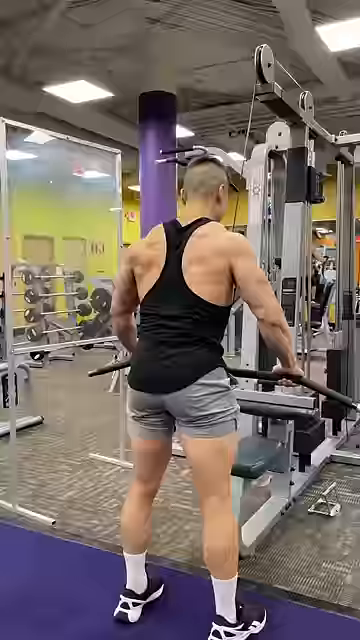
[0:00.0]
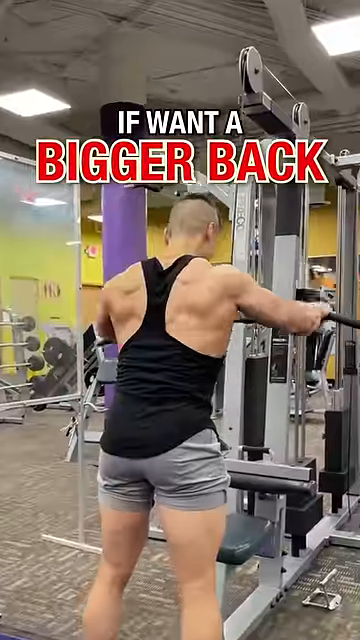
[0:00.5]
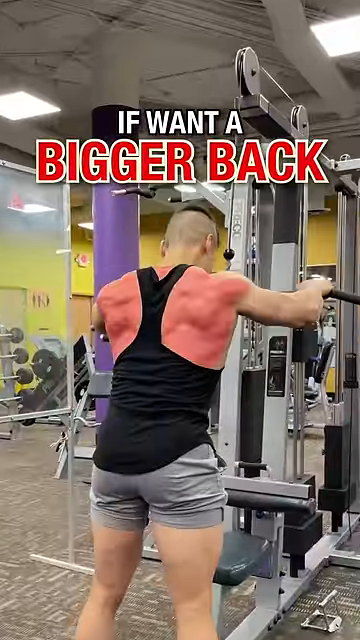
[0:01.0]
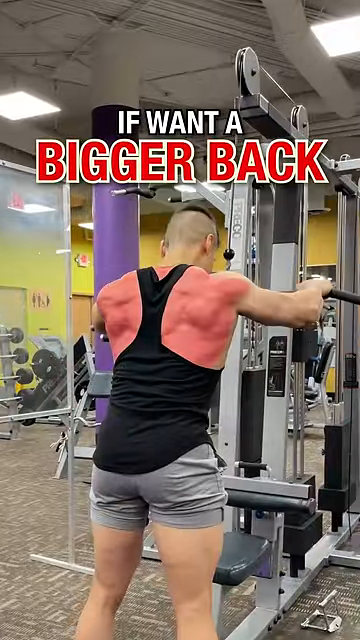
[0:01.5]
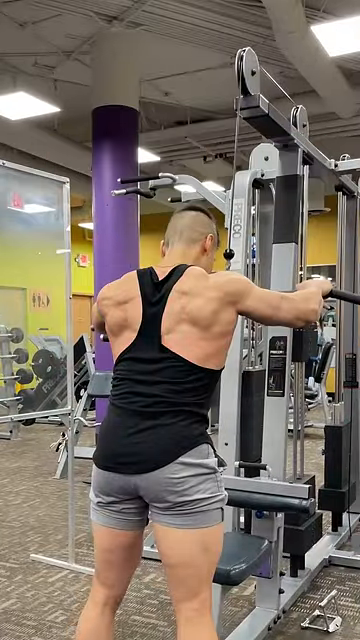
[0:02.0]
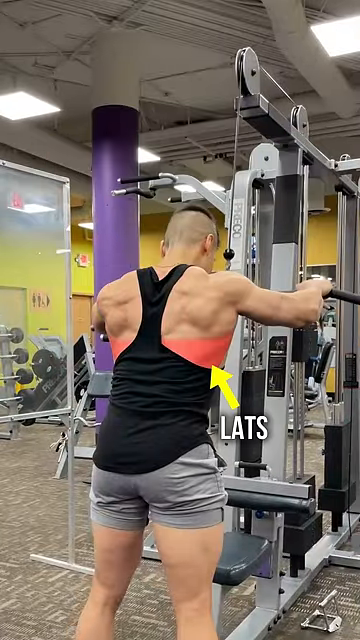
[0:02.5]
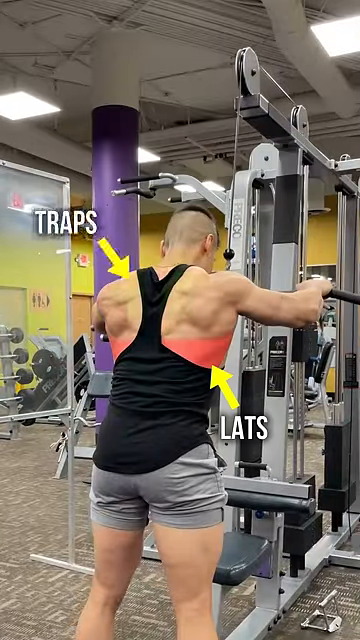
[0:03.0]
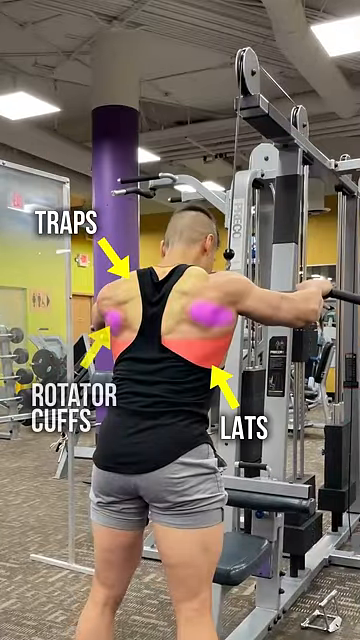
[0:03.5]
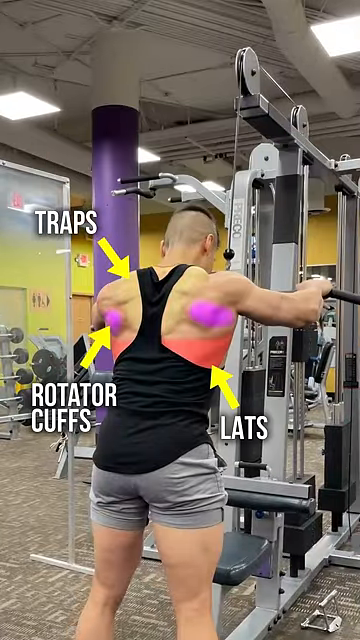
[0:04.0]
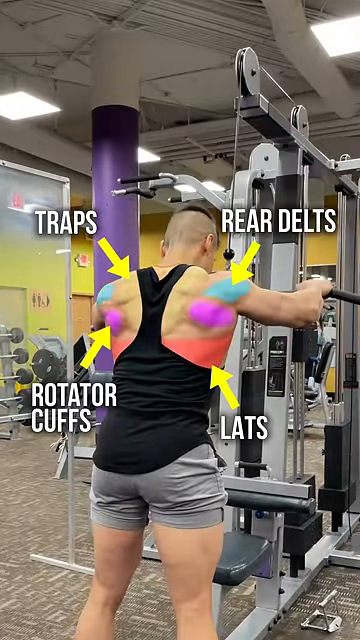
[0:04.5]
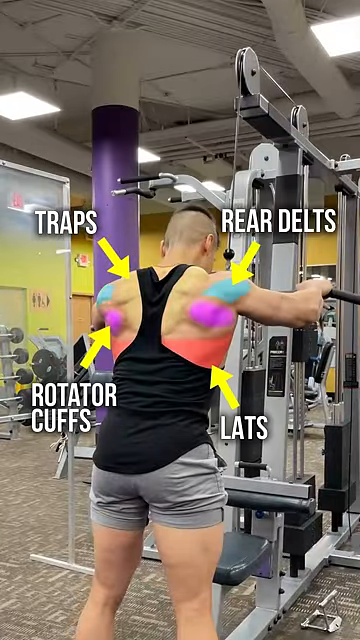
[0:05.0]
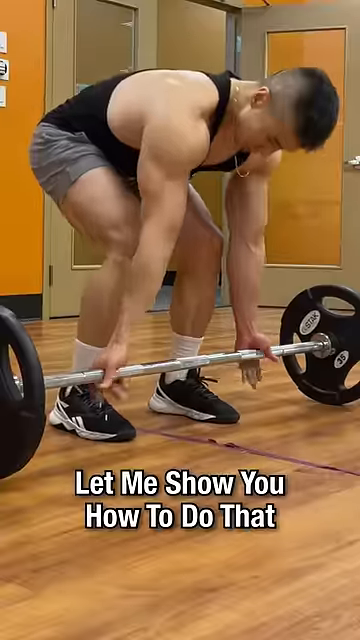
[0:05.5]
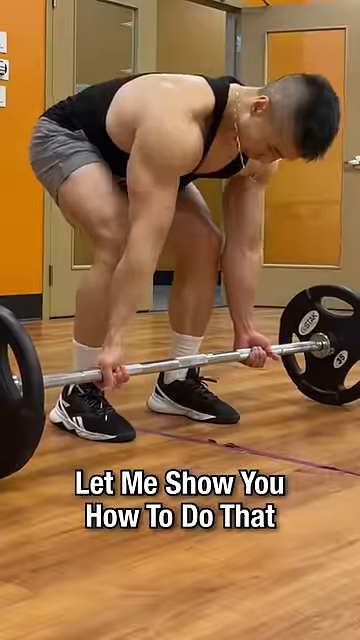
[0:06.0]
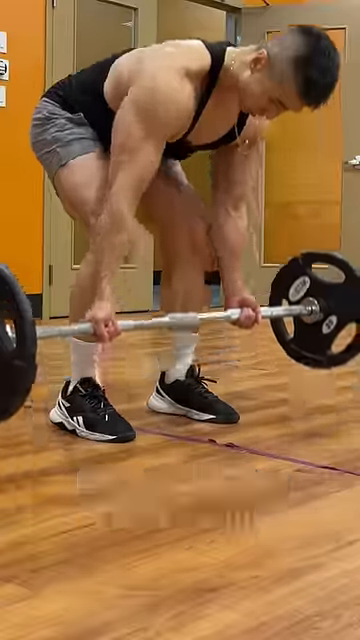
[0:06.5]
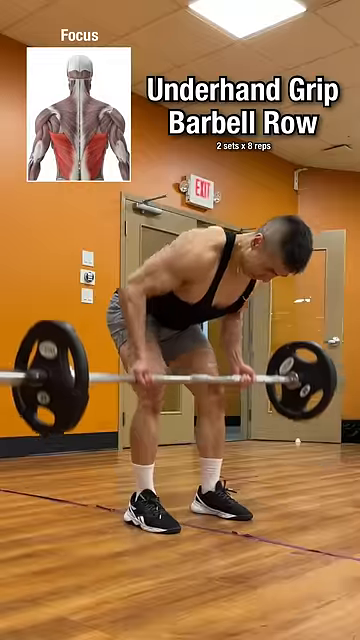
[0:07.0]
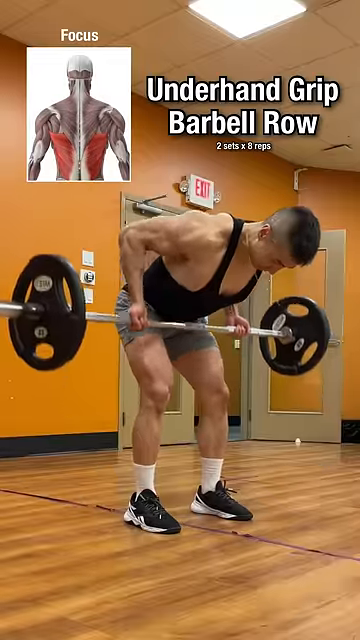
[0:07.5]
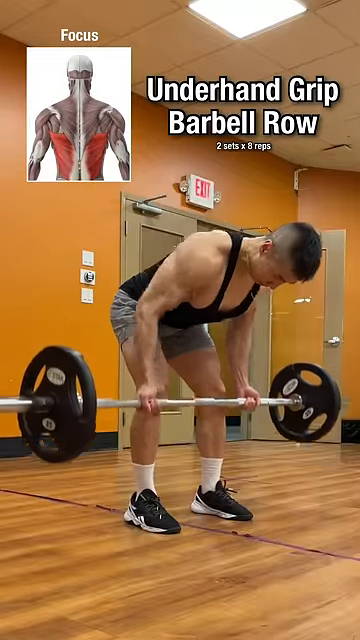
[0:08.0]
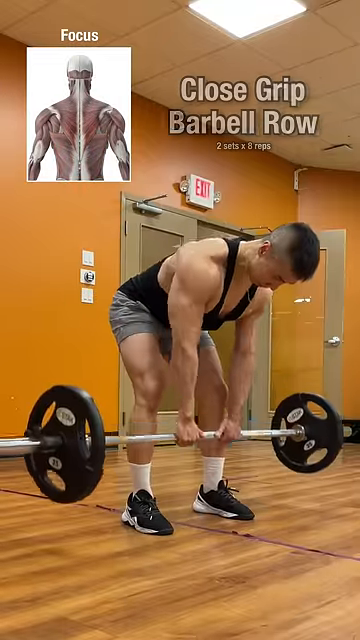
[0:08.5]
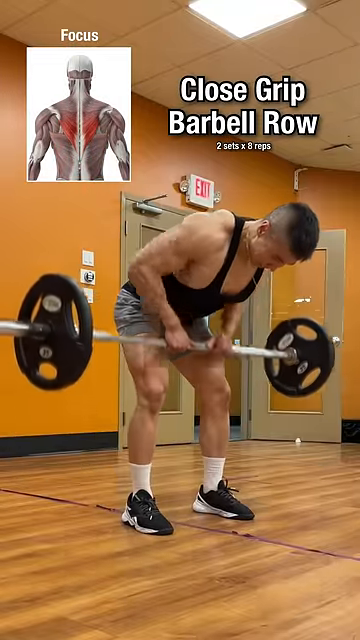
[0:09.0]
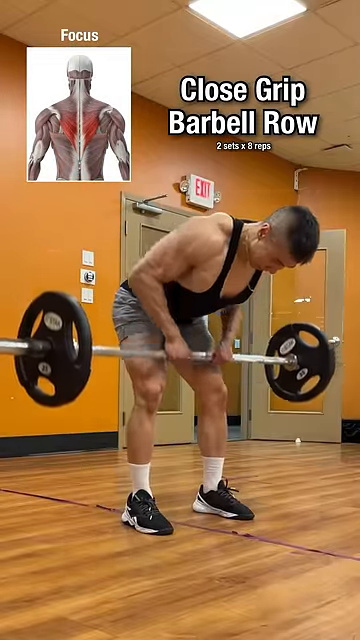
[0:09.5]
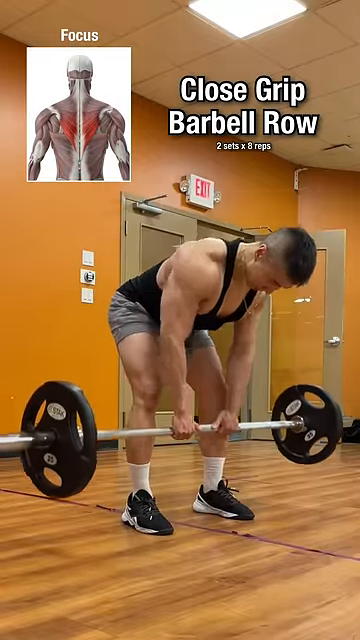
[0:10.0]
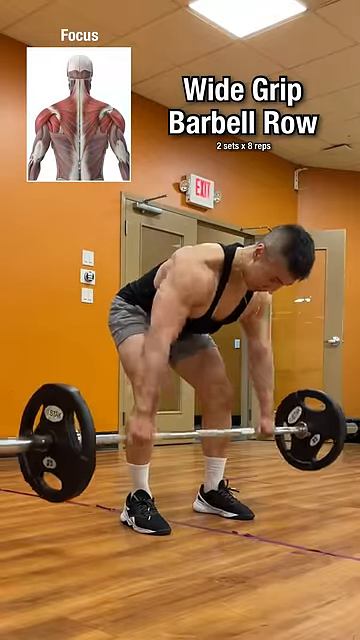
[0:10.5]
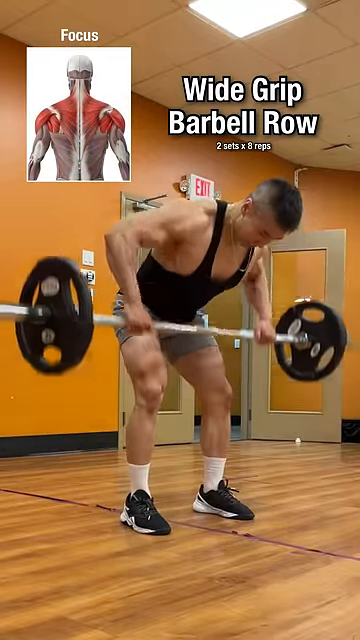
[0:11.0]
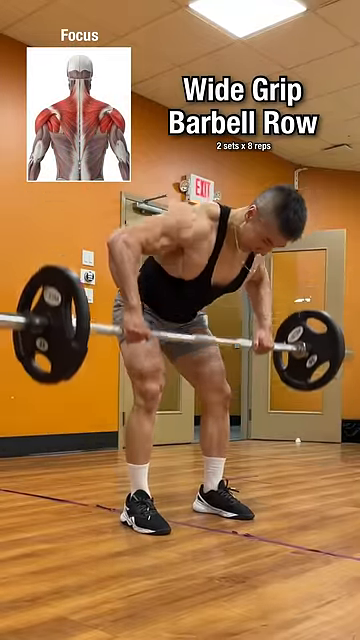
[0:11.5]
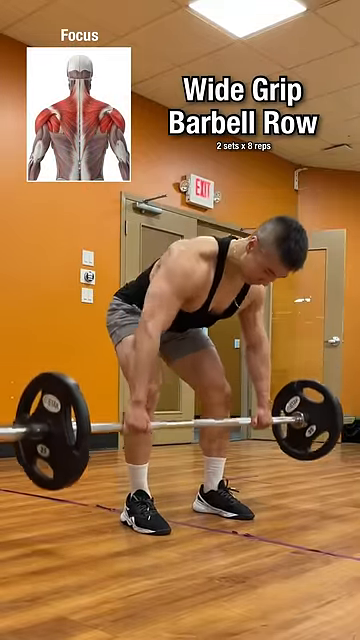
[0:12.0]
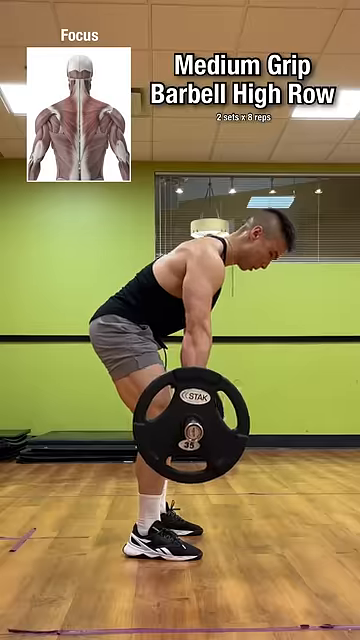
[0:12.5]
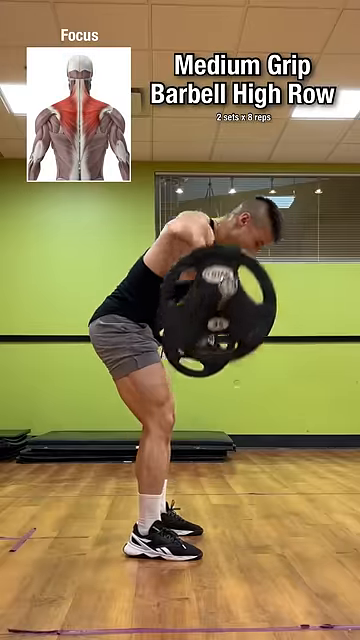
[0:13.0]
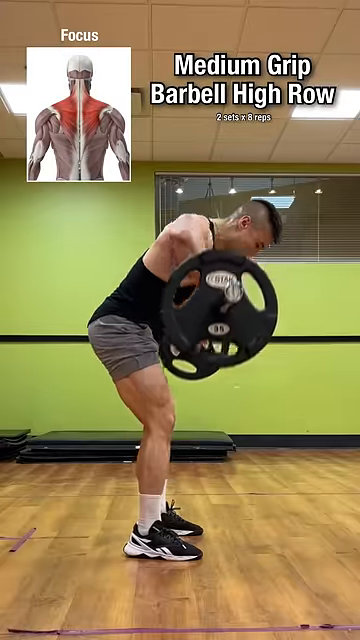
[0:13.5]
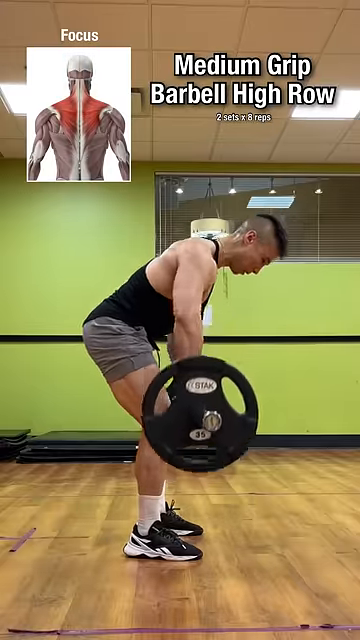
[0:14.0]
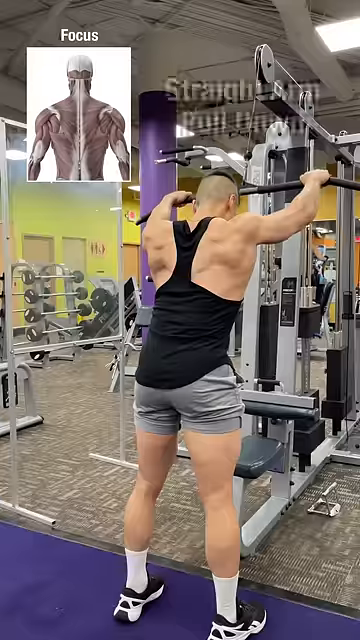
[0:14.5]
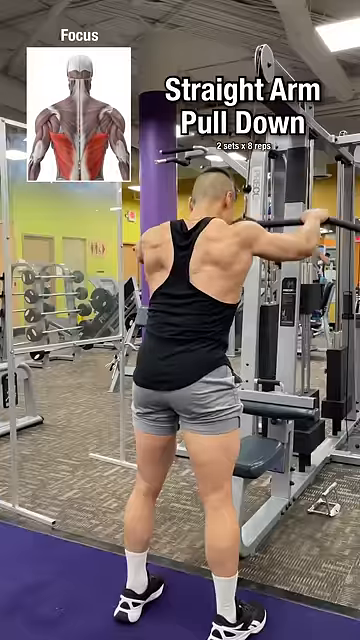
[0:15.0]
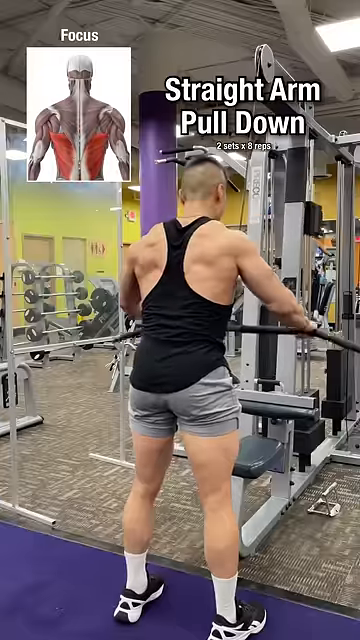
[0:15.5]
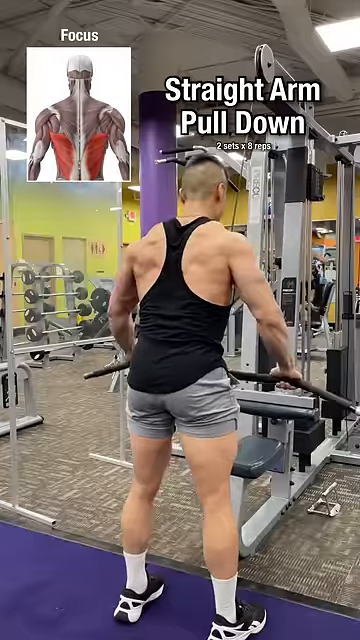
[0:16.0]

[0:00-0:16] What seems to be a YouTube video shows someone apparently demonstrating how to do different workouts at the gym. He seems to be a young-ish male, probably in his late 20s or early 30s, with dark hair, and maybe Asian American. When he does his pull-ups, he has large weights on the barbell, and then he moves to a machine. On-screen text shows "straight-arm pull-up" and says "if you want a bigger back", along with the lats, traps and rotator cuffs as areas to work. Further text reads "wide-grip barbell row" and "straight-arm pull-down", saying to work the lats, traps, rotator cuffs and rear delts. The visuals include larger text, and text in the upper left-hand corner indicates anatomically and physiologically where the focus should be.